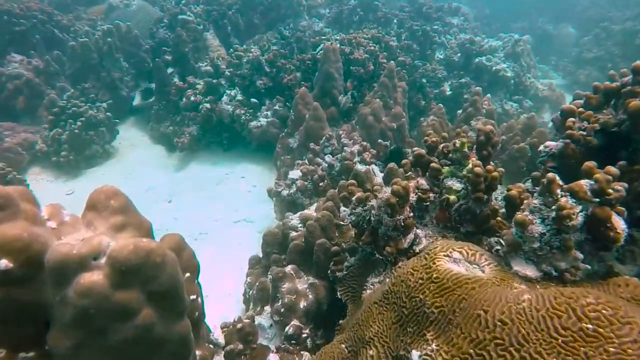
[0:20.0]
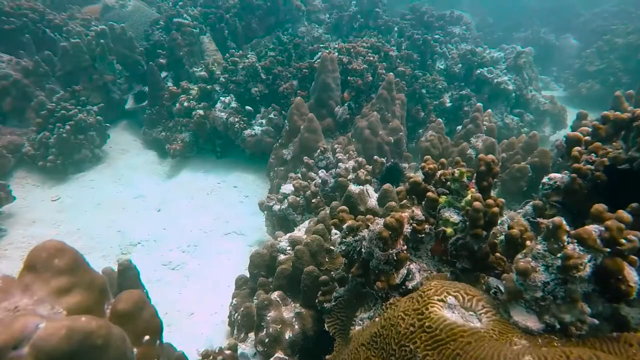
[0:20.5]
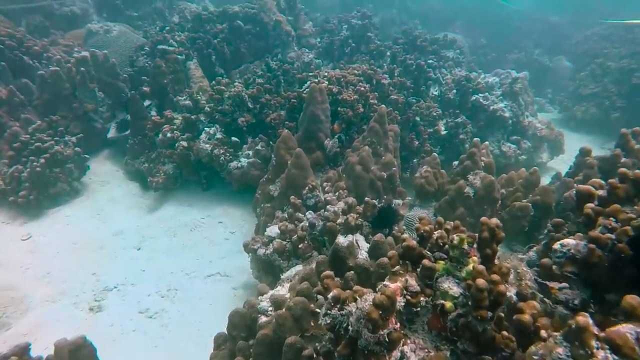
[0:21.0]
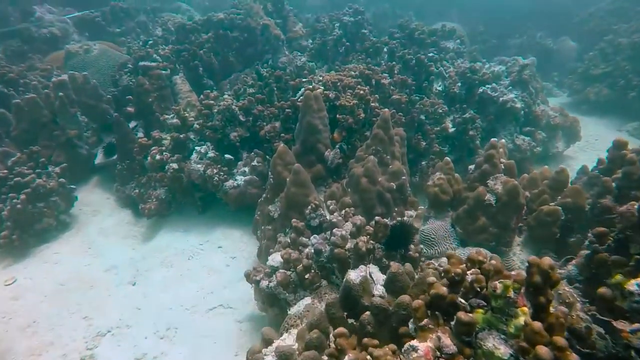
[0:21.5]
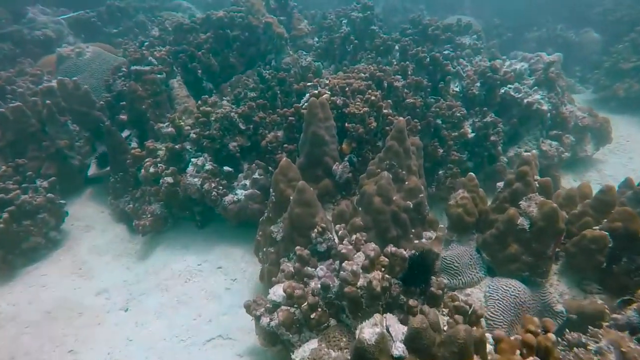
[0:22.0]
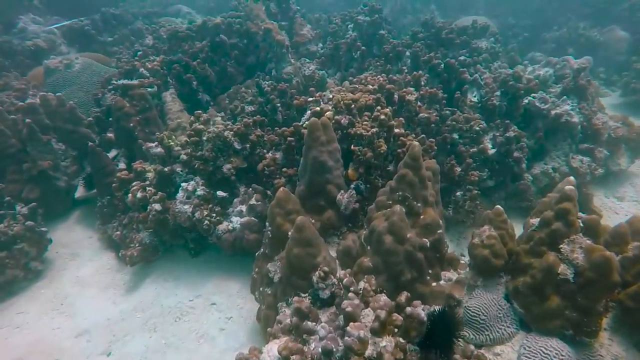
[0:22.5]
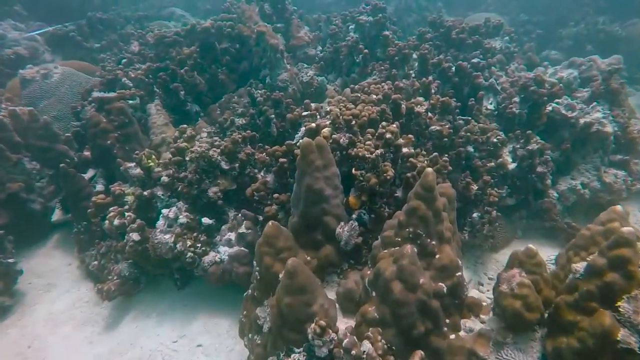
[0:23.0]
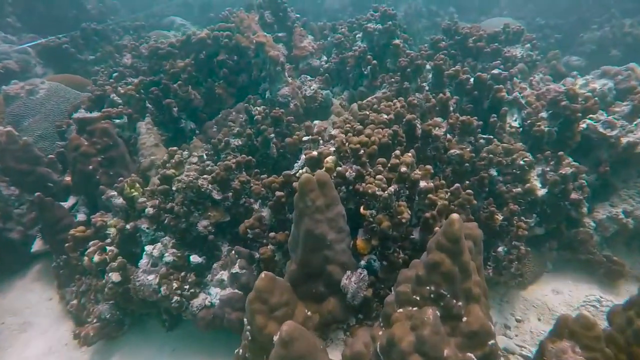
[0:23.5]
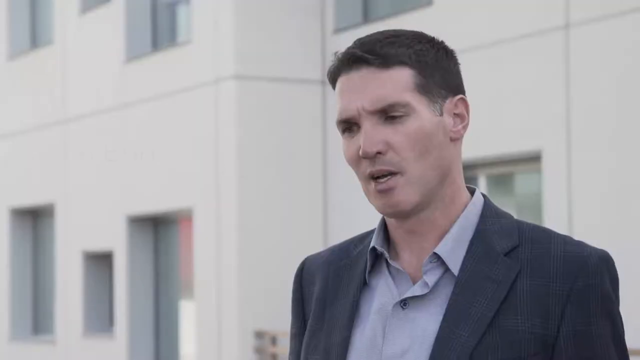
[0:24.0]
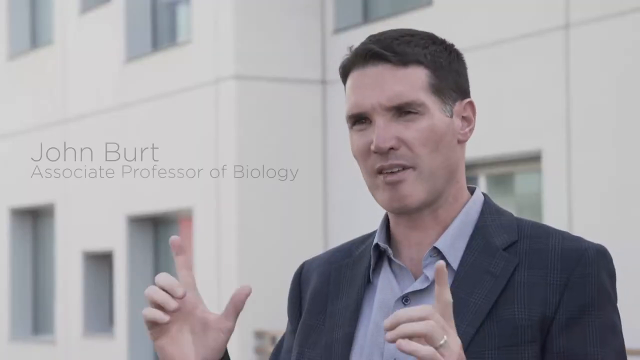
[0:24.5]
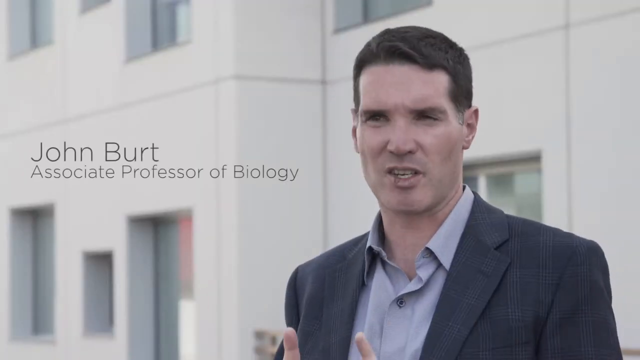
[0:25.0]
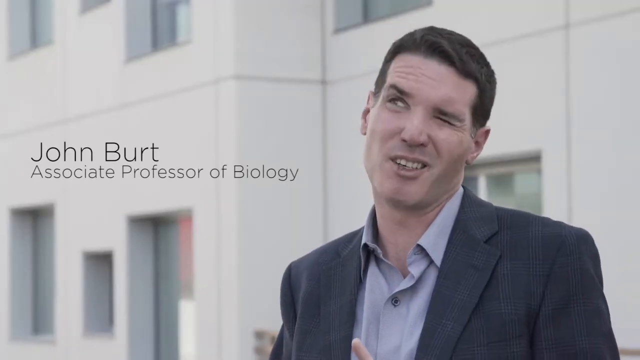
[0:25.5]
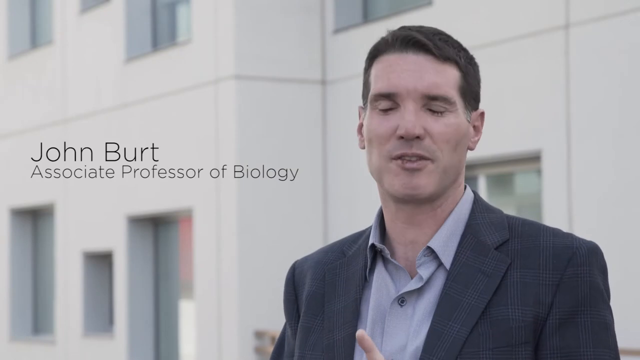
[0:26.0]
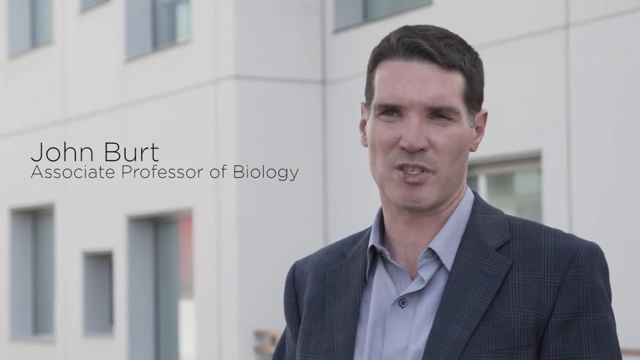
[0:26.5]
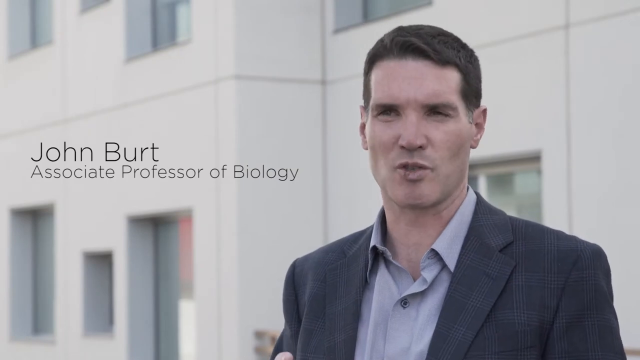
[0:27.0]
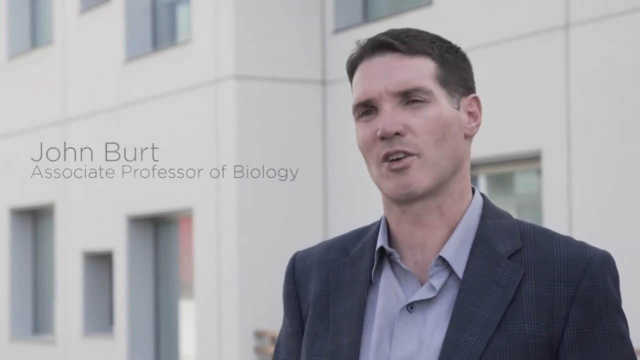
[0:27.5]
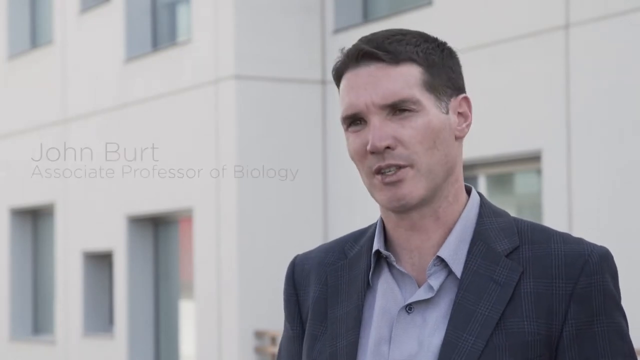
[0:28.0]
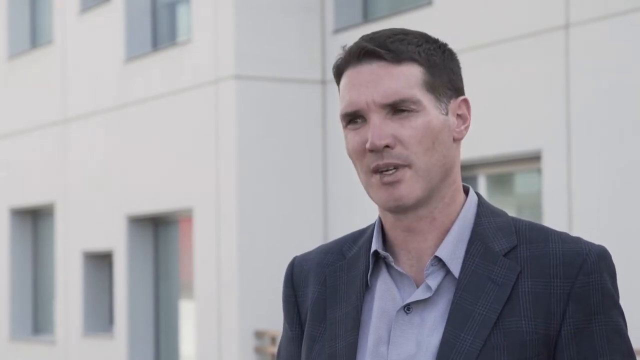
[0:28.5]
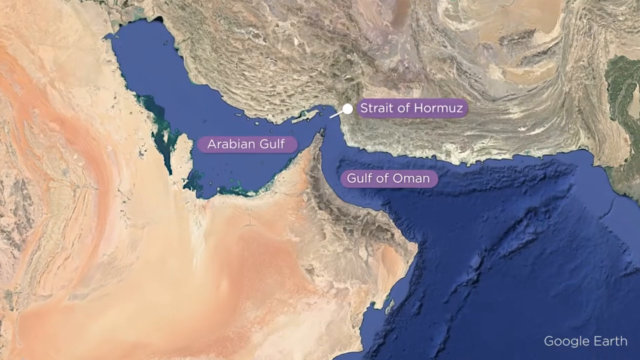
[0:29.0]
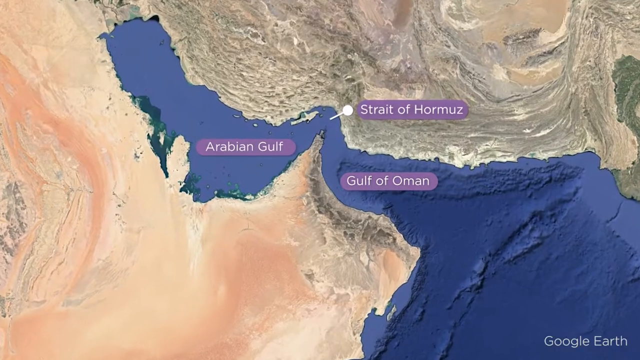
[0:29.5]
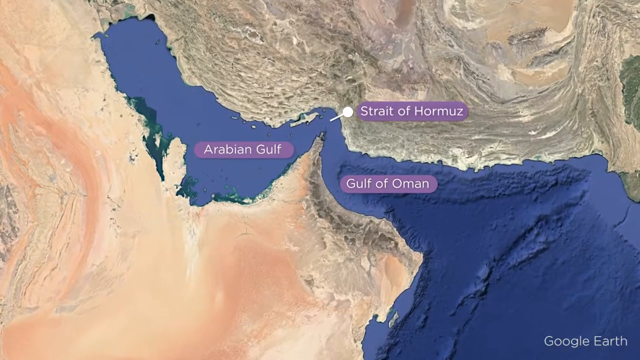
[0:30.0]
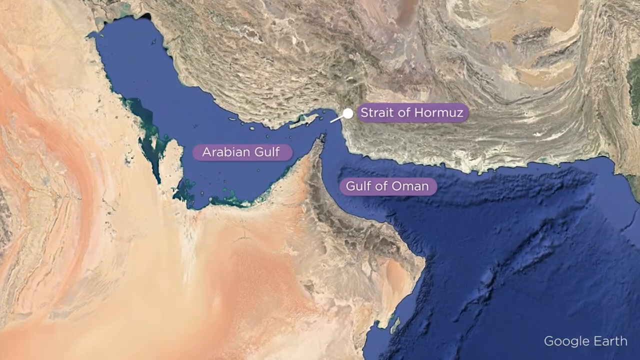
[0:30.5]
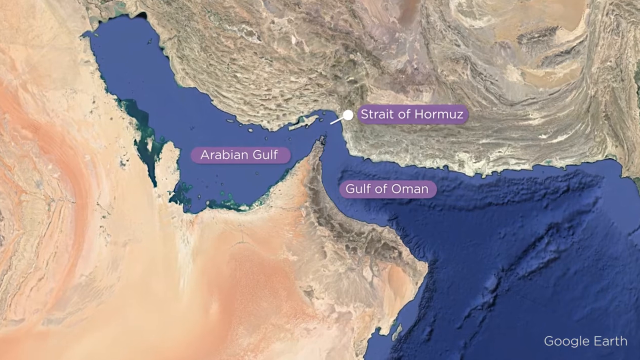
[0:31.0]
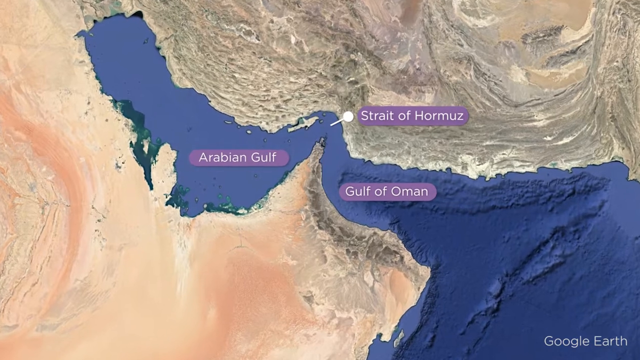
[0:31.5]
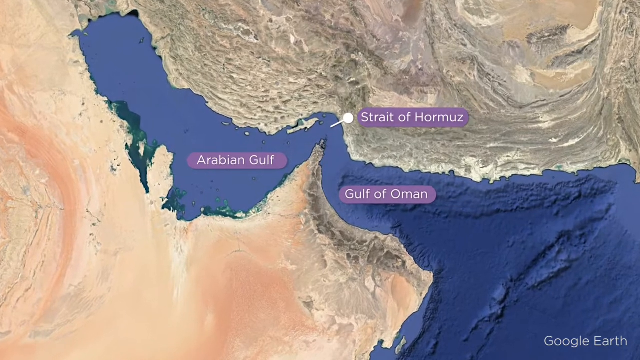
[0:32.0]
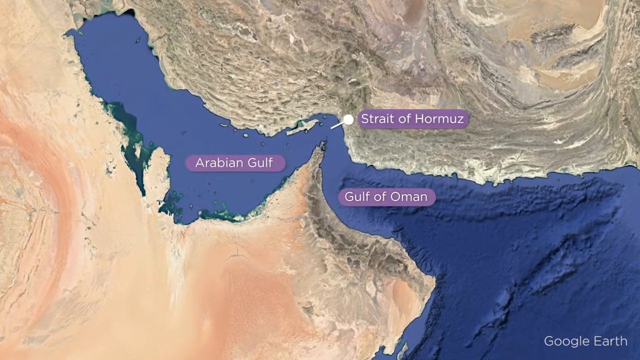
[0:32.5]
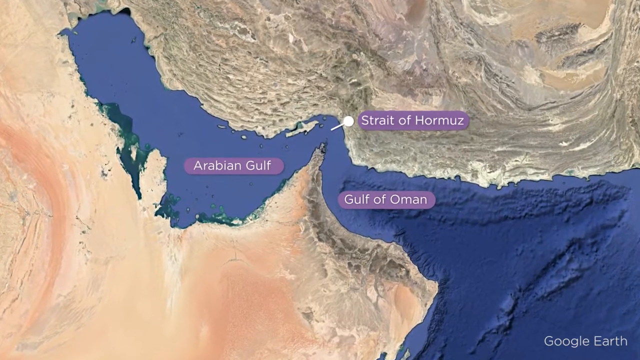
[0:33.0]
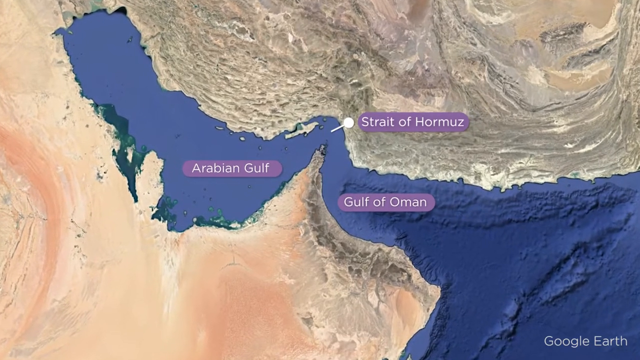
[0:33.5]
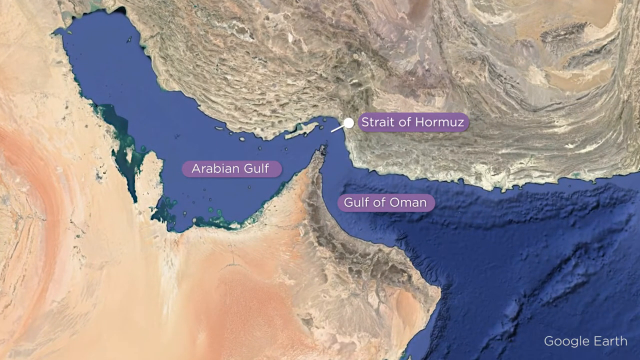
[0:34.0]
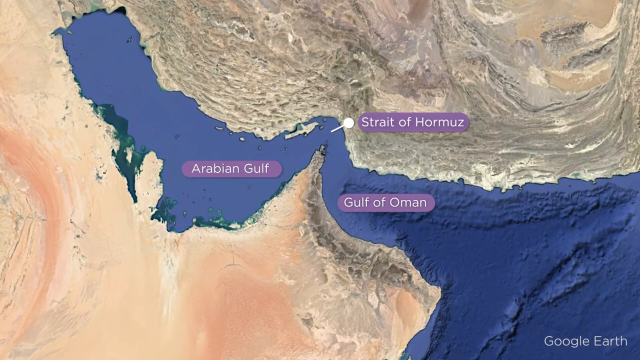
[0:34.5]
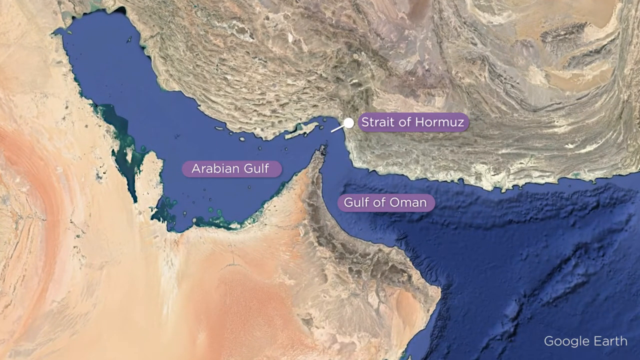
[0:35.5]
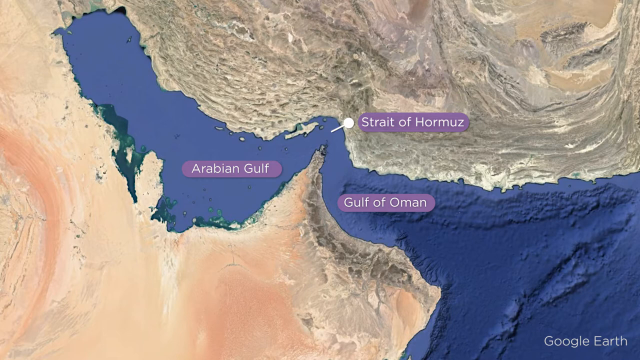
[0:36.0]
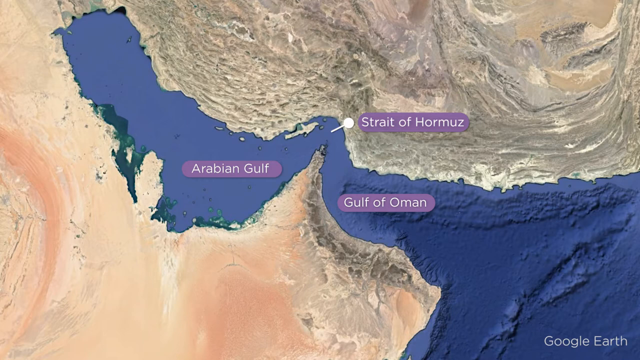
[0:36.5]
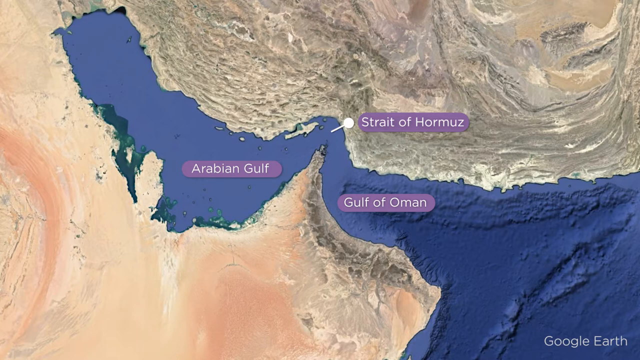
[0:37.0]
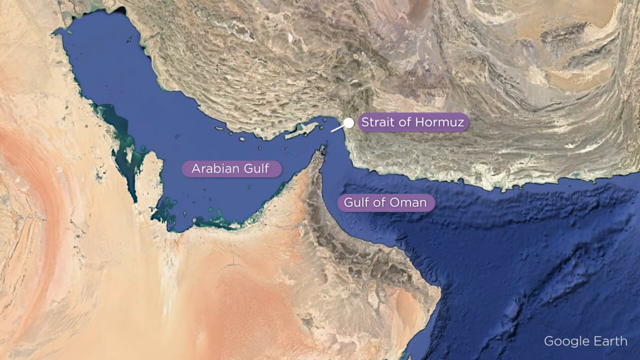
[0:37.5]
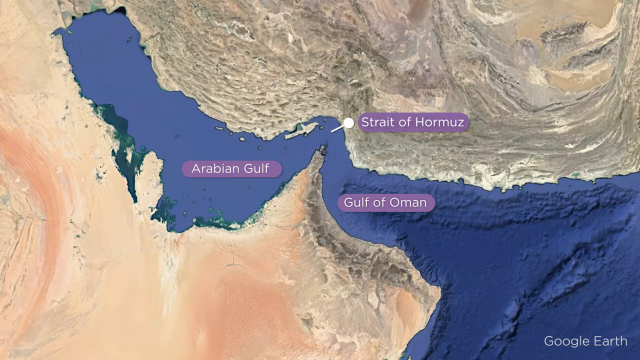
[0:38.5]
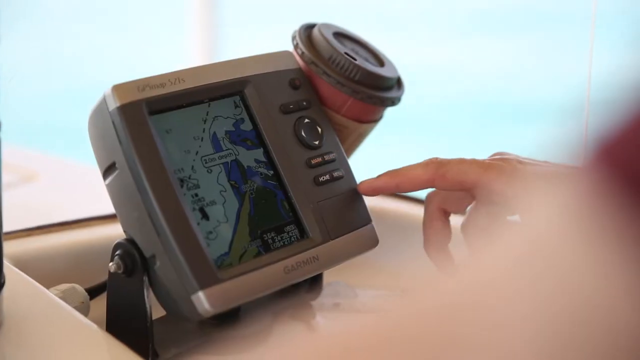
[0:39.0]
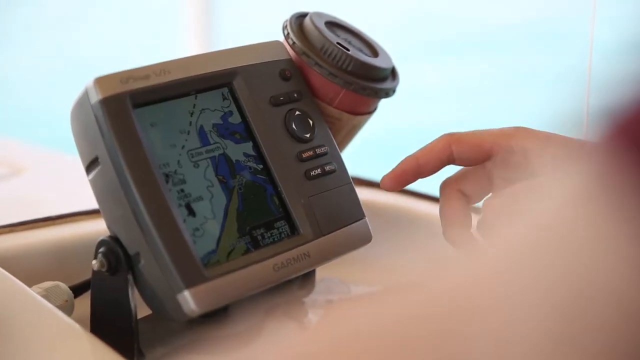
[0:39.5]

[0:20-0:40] The red and brown coral reef is still shown, then the video cuts to a man standing outside a building. Text appears identifying him as John Burt, associate professor of biology. He is a Caucasian man who looks to be in his 40s, with very short hair. He wears a dark gray suit jacket and a light gray dress shirt with no tie, the top button unbuttoned. He speaks to the camera with calm, professional facial expressions. The video then cuts to a photograph of a map showing two bodies of water and the terrain. One body of water is labeled "Arabian Gulf" and another "Gulf of Oman", and a white pointer points at a small part of a body of water labeled "Strait of Hormuz". The labels have purple borders with white text.